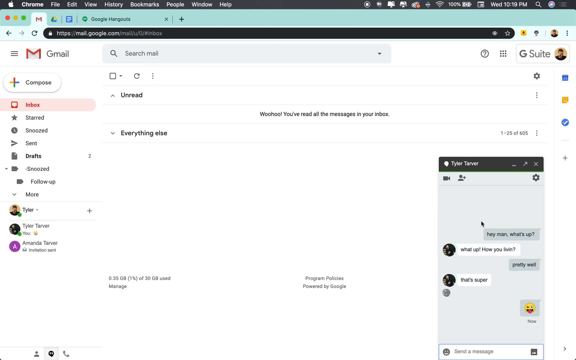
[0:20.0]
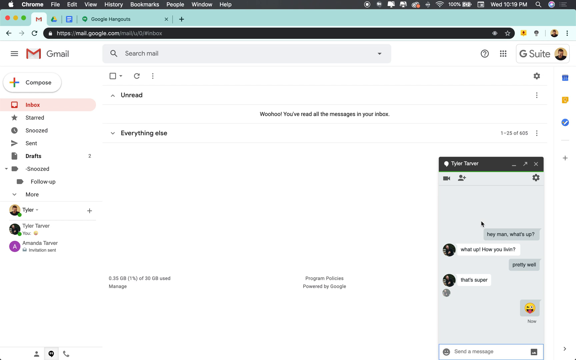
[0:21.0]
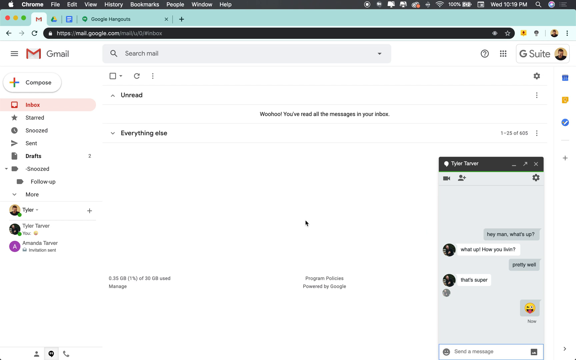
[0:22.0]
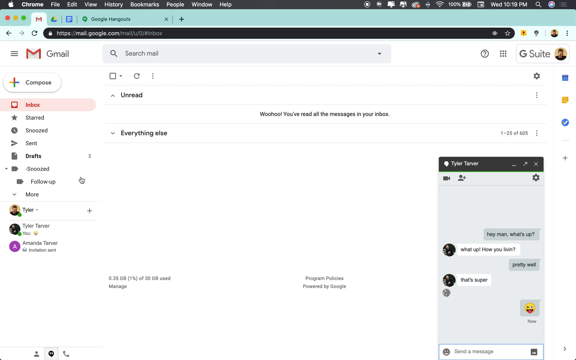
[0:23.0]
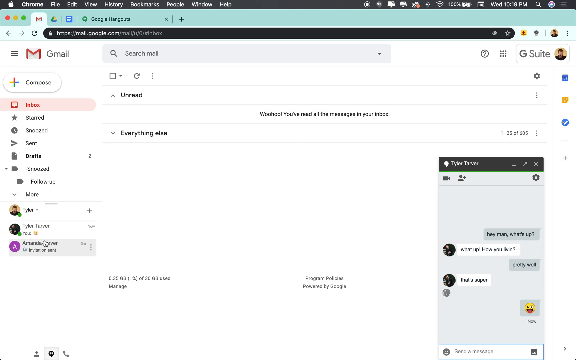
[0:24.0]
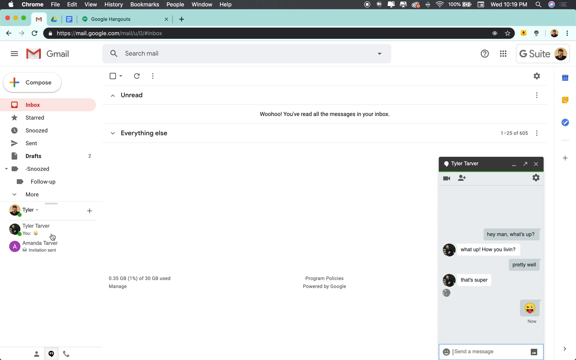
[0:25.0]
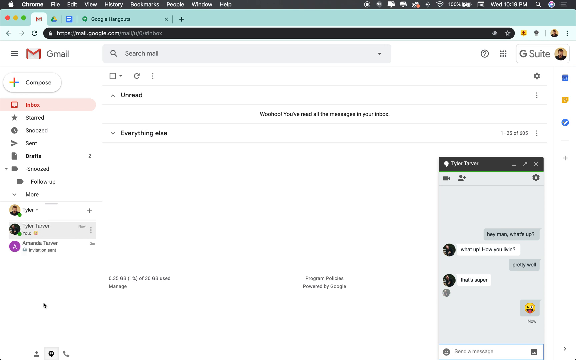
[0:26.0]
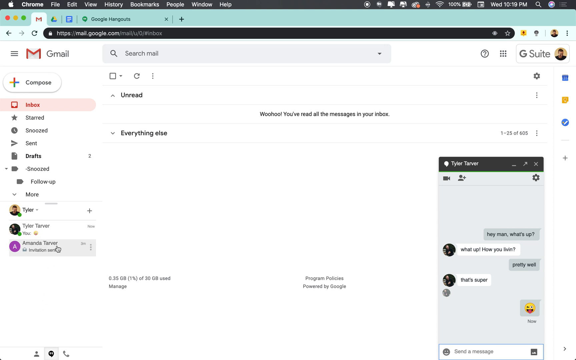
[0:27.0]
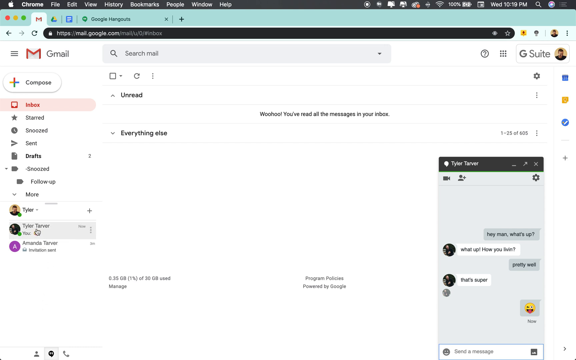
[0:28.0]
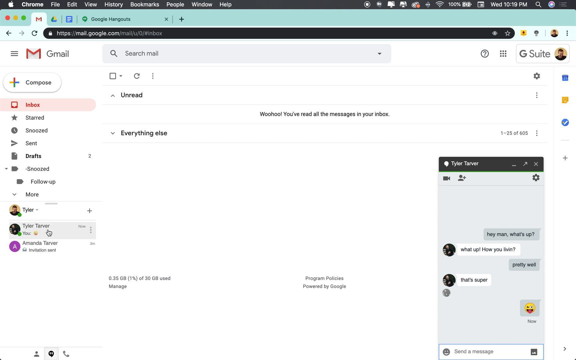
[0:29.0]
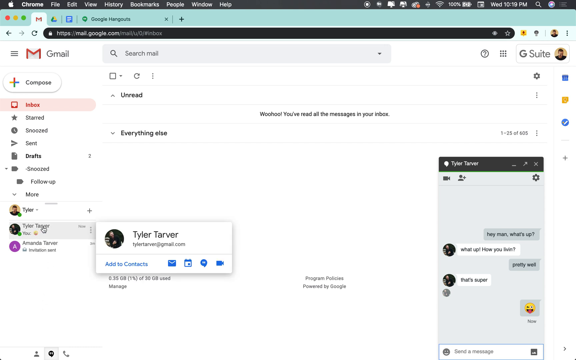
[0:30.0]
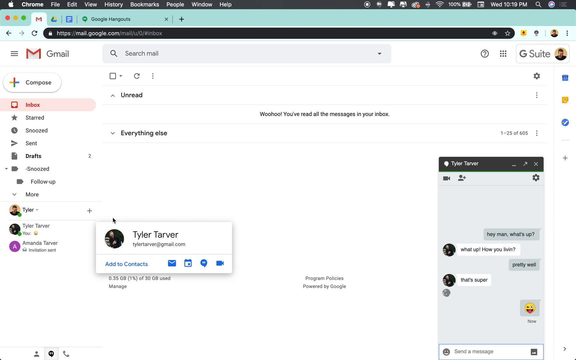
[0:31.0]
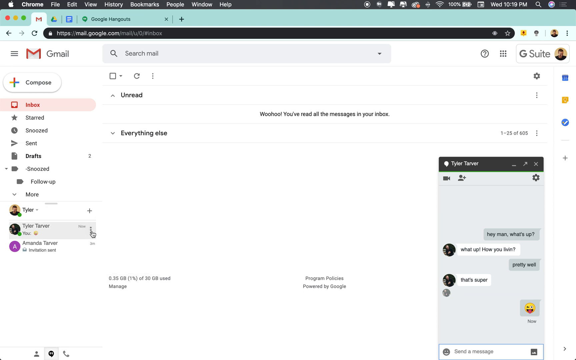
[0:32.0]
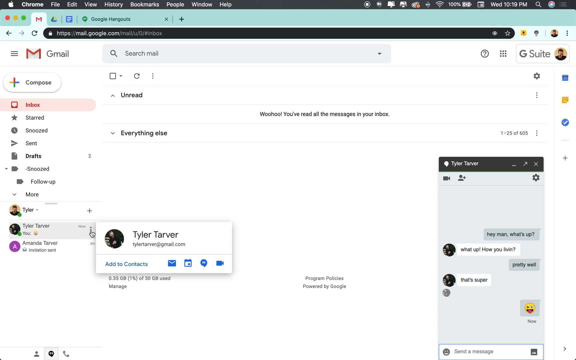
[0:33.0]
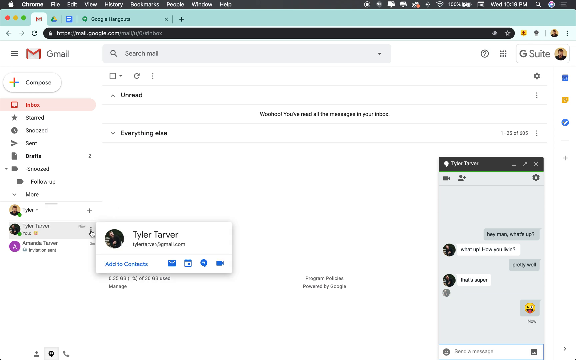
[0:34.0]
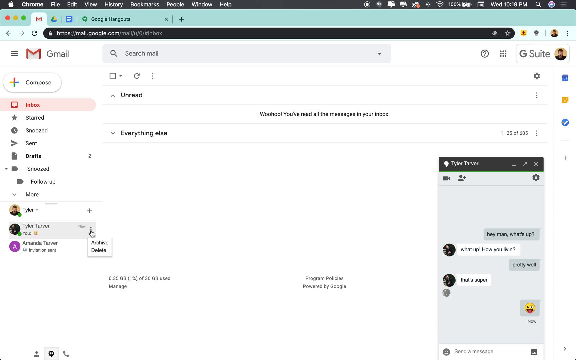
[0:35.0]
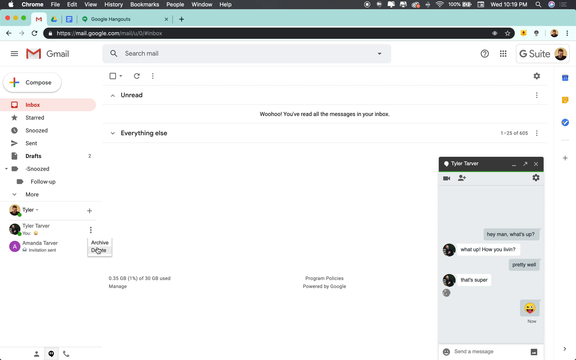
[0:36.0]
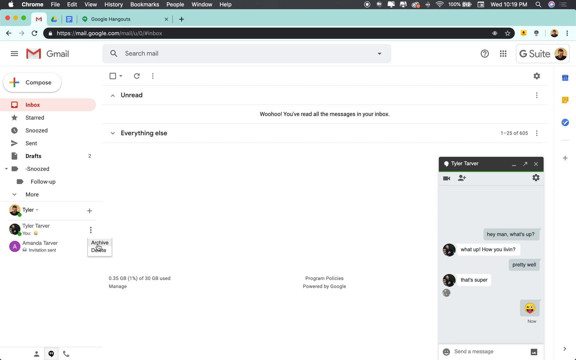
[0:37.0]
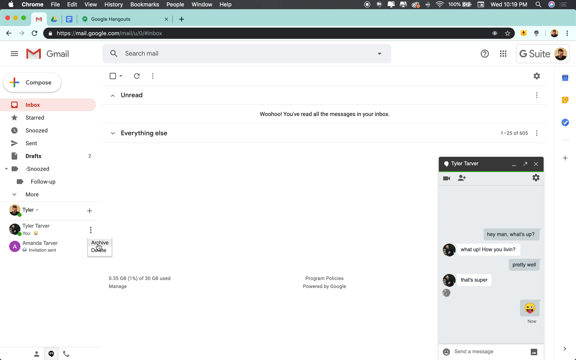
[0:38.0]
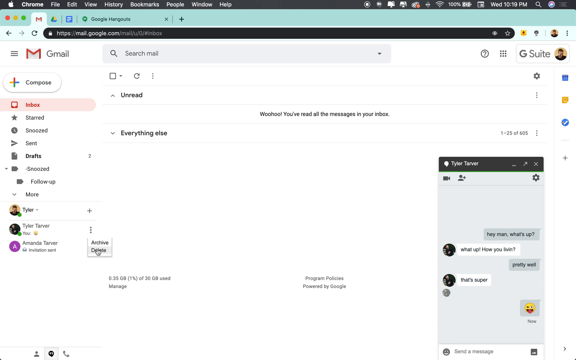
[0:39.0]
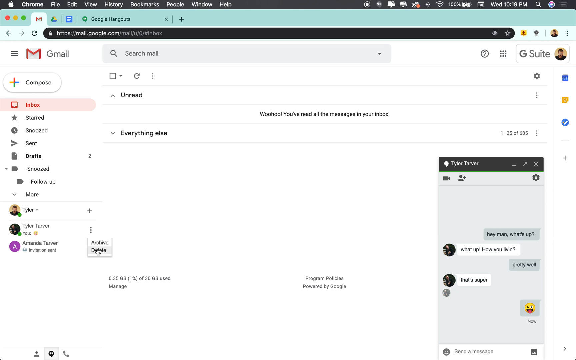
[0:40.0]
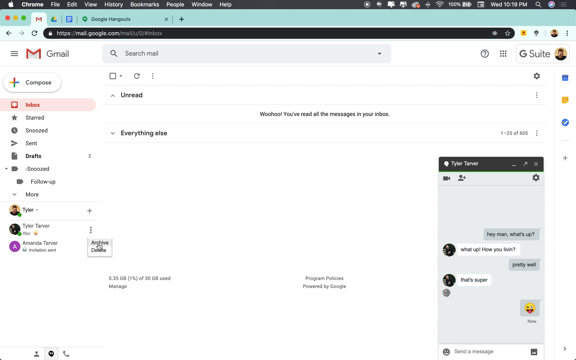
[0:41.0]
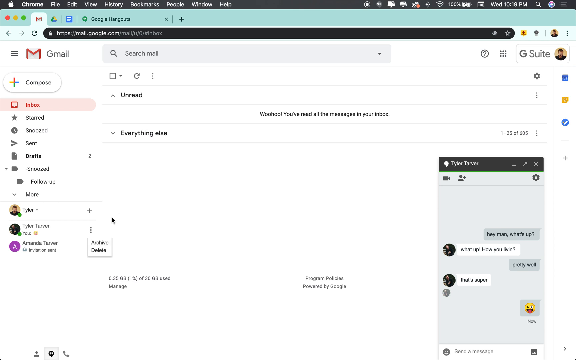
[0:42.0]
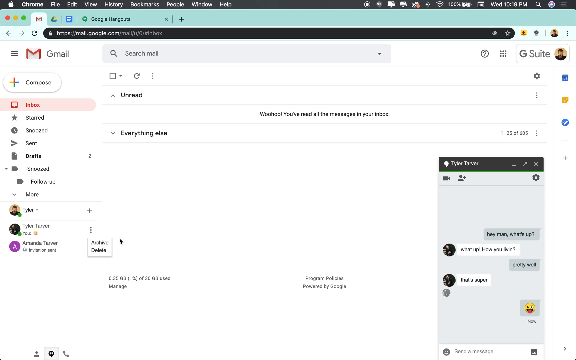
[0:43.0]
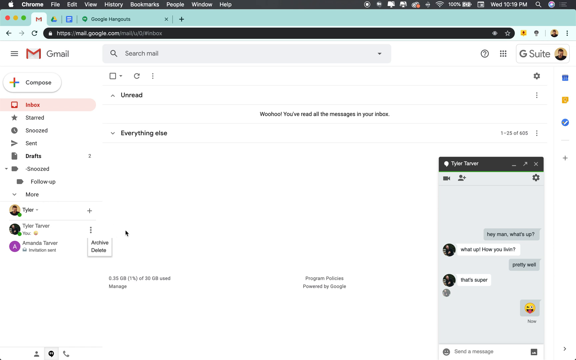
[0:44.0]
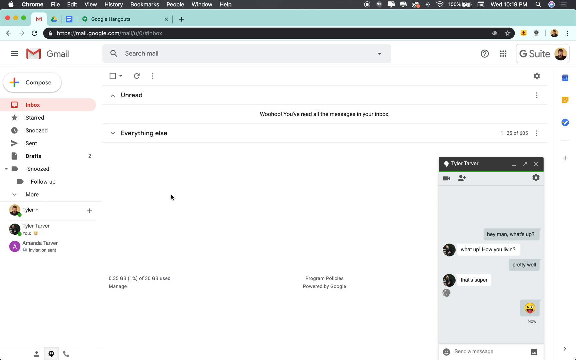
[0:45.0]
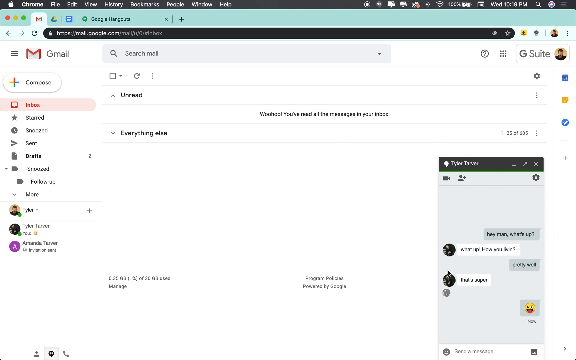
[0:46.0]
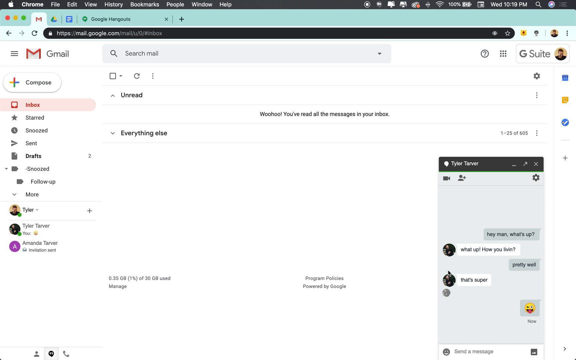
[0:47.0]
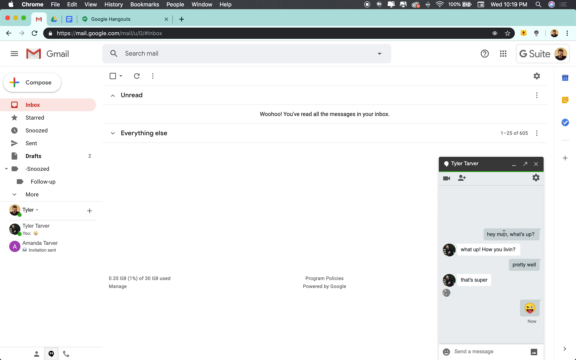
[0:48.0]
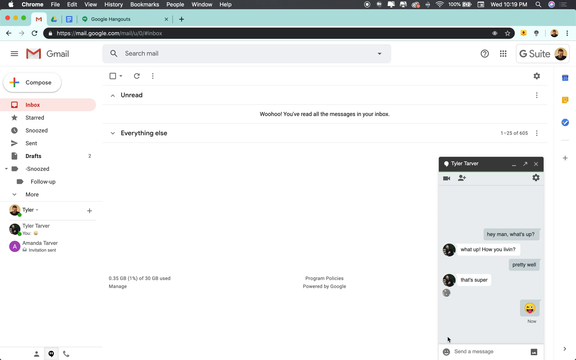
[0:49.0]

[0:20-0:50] In Gmail, the user moves the mouse to the left to show a few other people: Tyler, apparently the user themselves, and Amanda Tarver. They click on Tyler Tarver, bringing up an email below it along with an indication that they are not added contacts, plus options such as emailing them. They hover over the three small dots beside the name and click, revealing options to archive and to delete. They scroll up and down, move the mouse off, and click off of it. Then they move the mouse to the right to show the conversation.